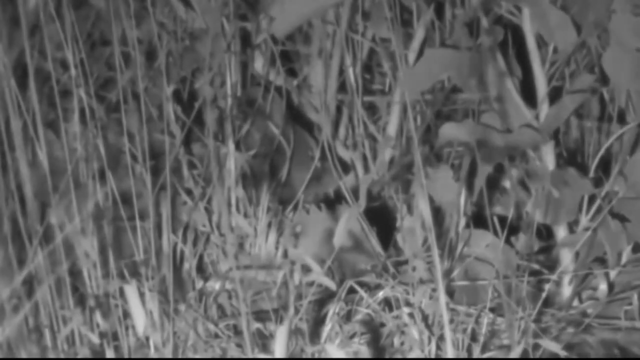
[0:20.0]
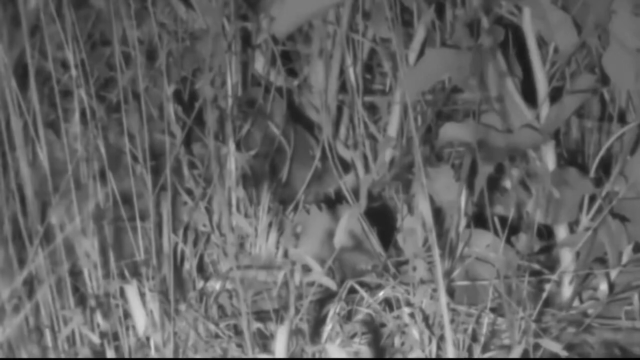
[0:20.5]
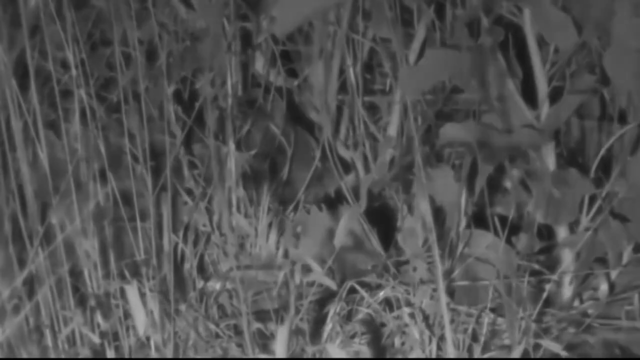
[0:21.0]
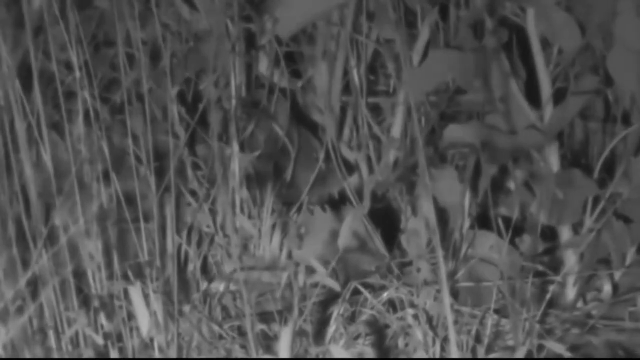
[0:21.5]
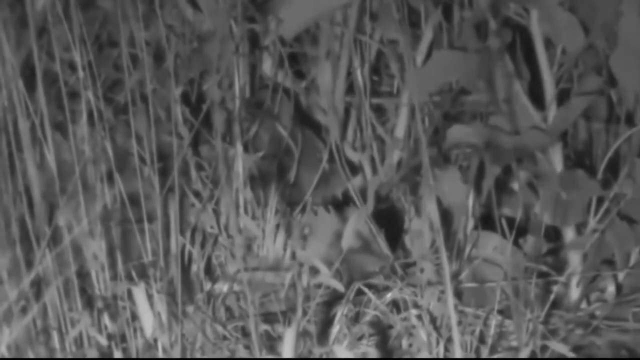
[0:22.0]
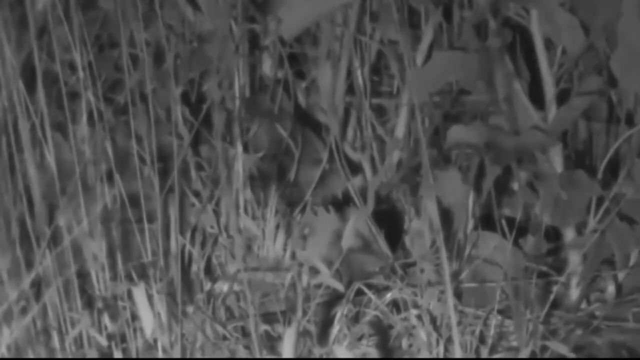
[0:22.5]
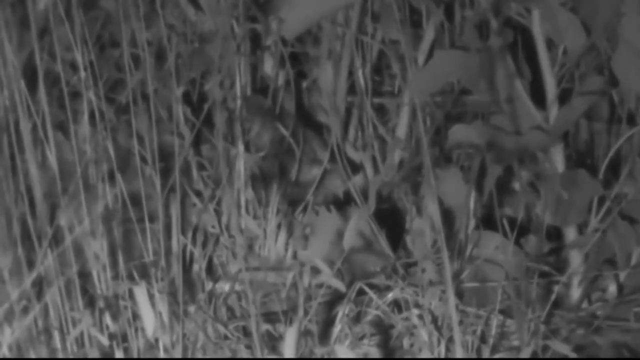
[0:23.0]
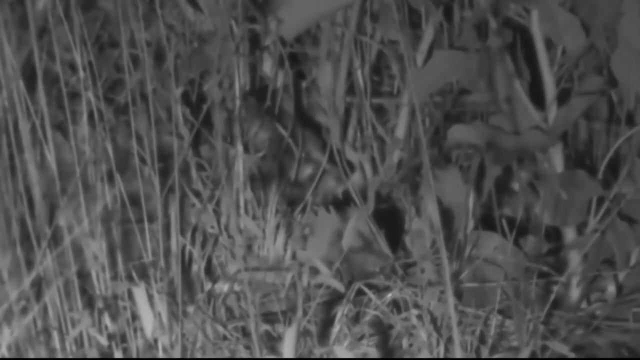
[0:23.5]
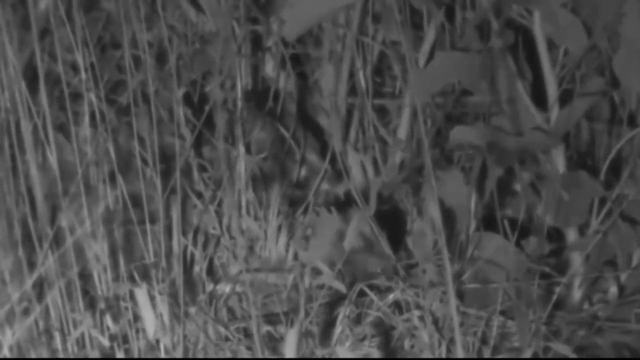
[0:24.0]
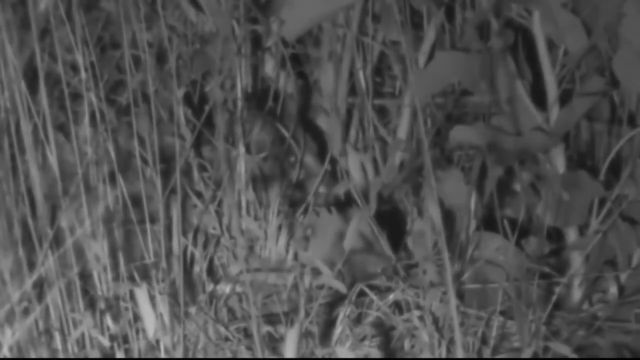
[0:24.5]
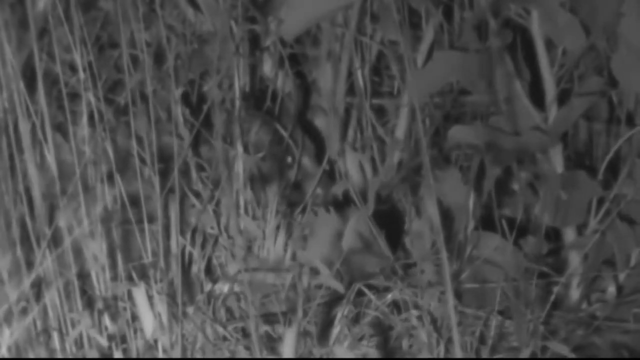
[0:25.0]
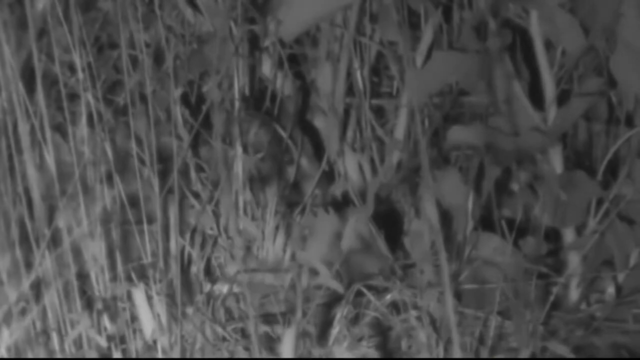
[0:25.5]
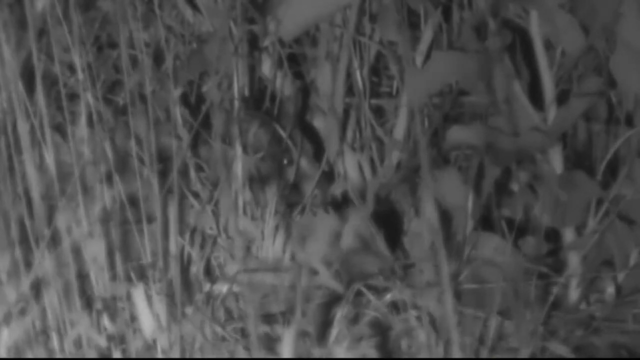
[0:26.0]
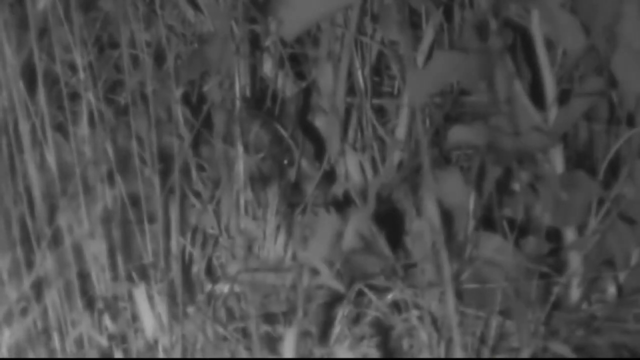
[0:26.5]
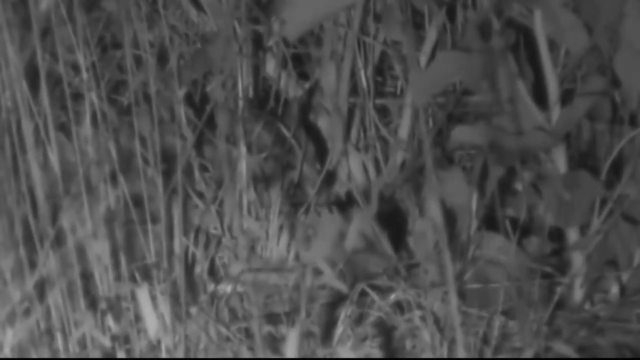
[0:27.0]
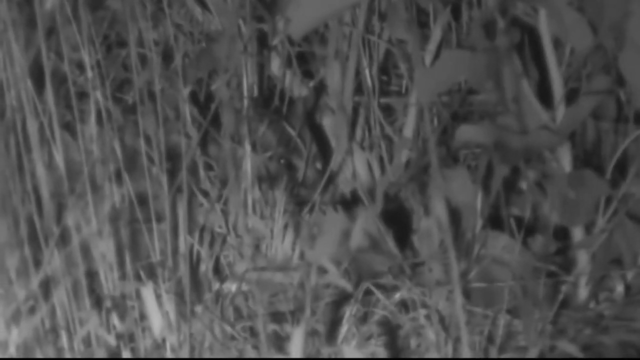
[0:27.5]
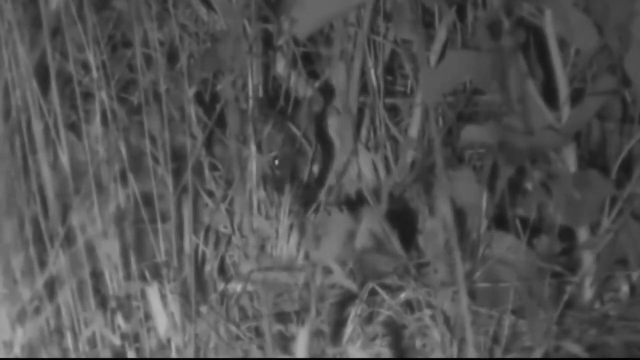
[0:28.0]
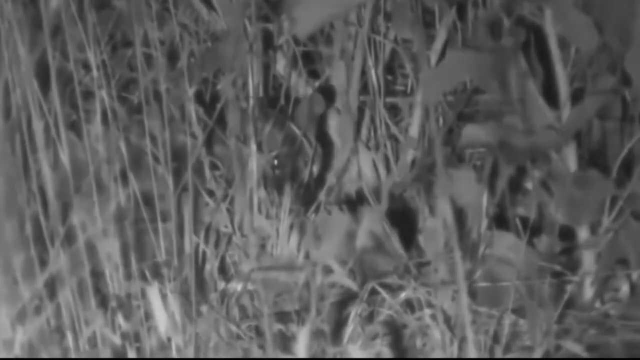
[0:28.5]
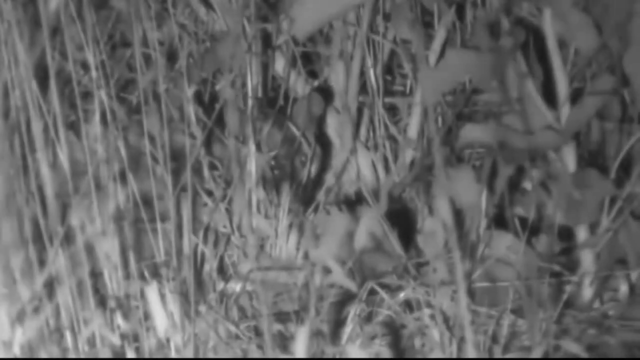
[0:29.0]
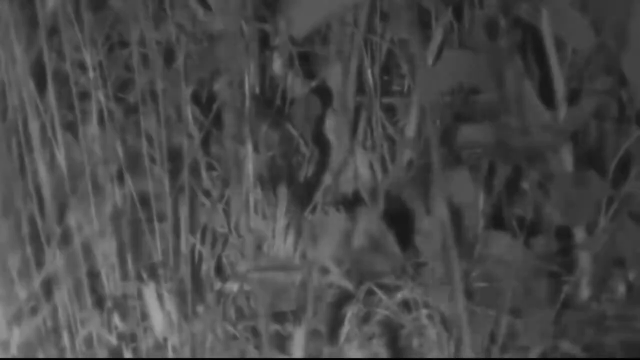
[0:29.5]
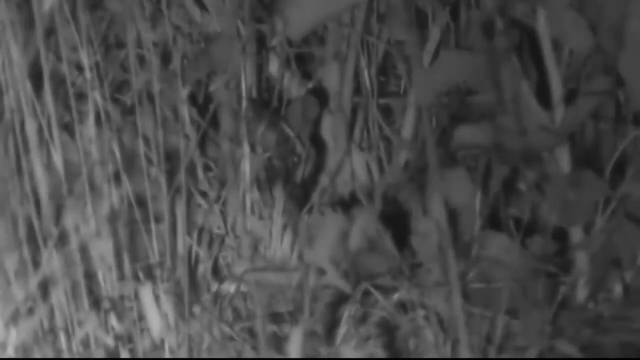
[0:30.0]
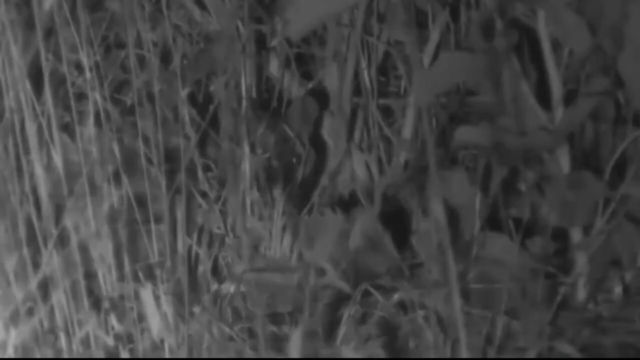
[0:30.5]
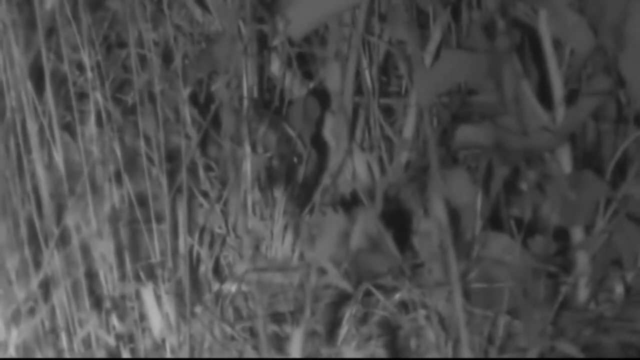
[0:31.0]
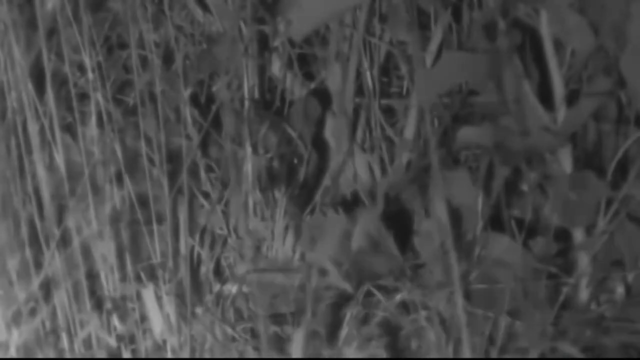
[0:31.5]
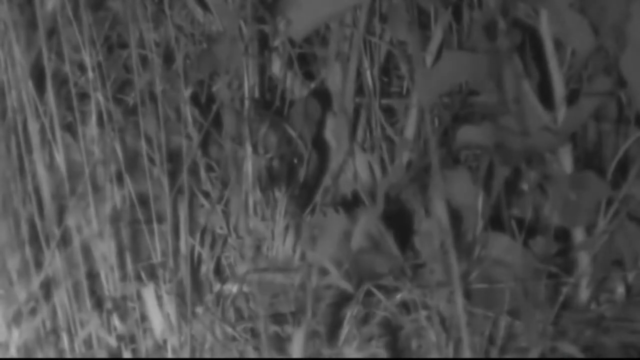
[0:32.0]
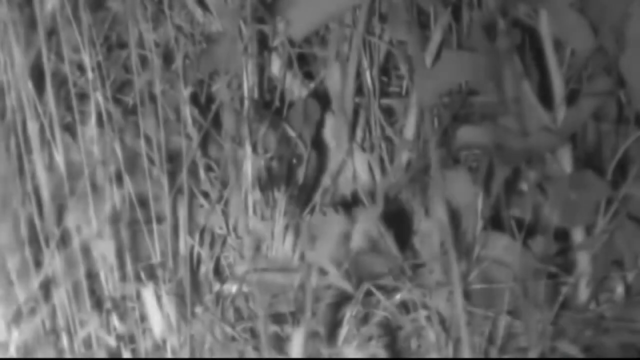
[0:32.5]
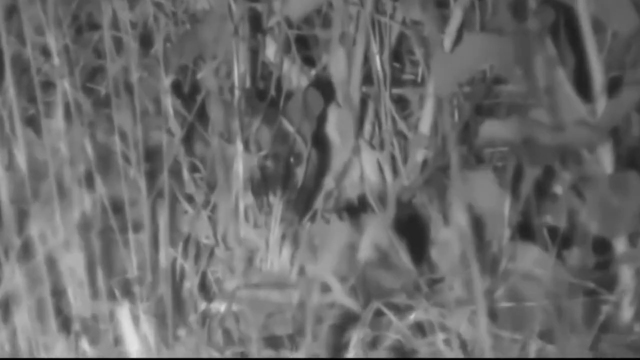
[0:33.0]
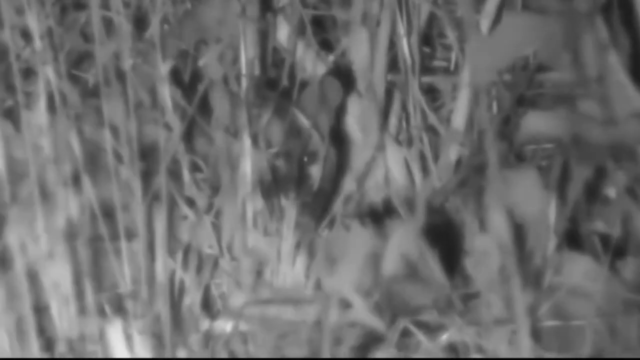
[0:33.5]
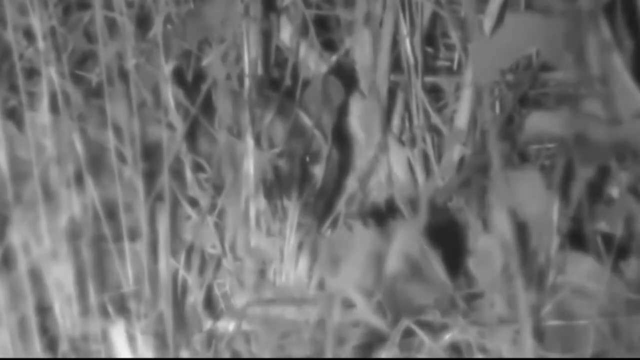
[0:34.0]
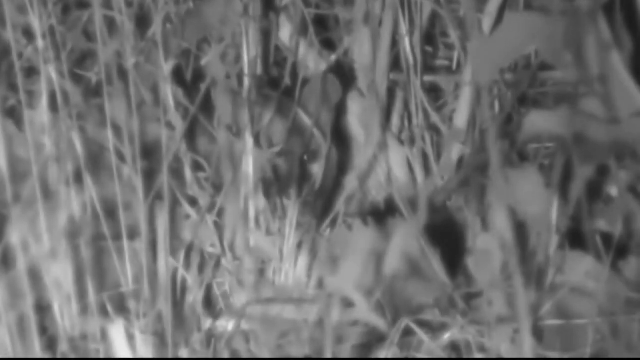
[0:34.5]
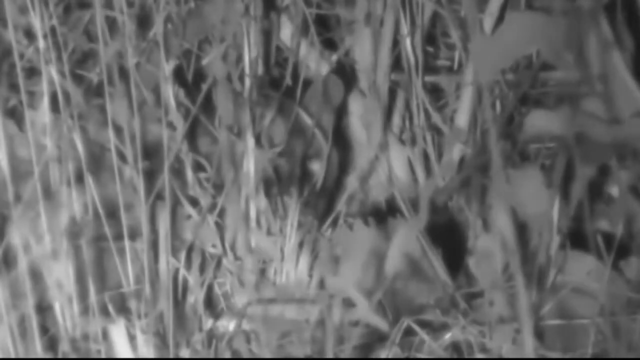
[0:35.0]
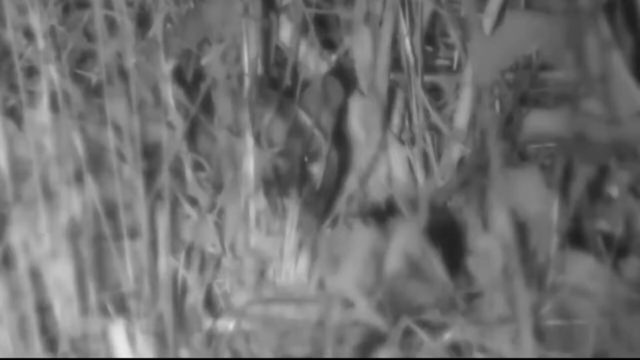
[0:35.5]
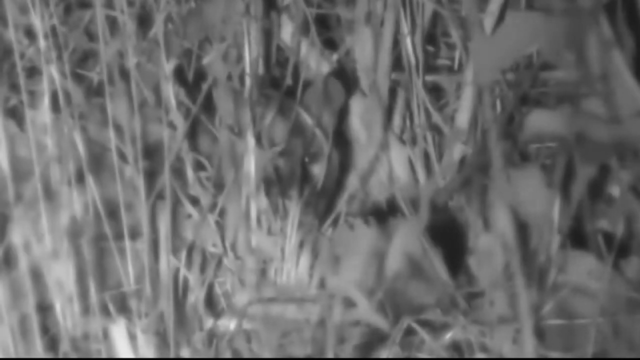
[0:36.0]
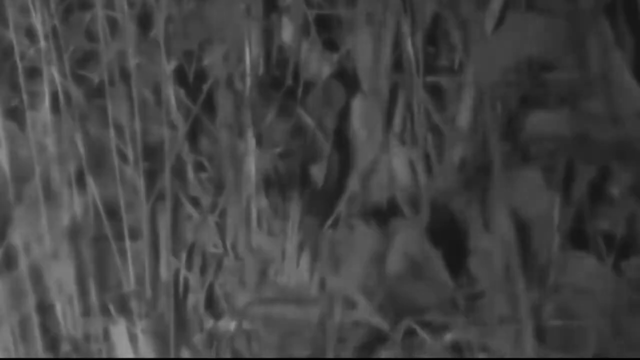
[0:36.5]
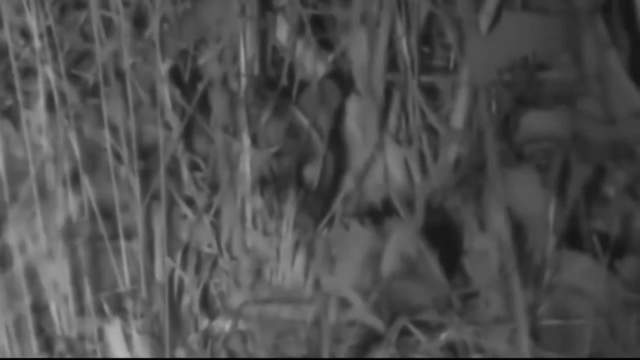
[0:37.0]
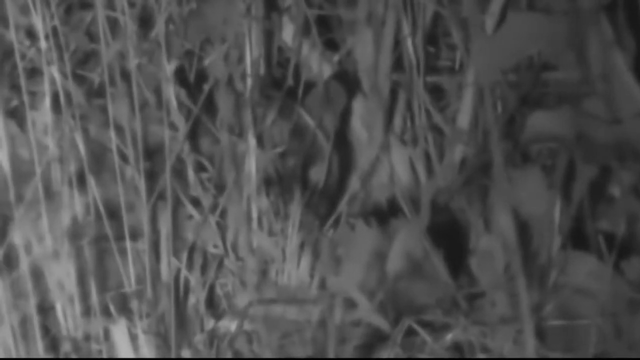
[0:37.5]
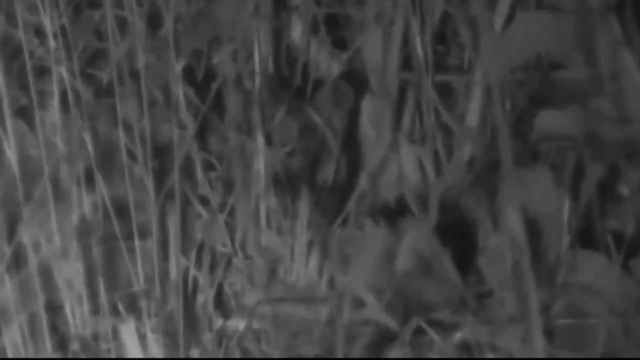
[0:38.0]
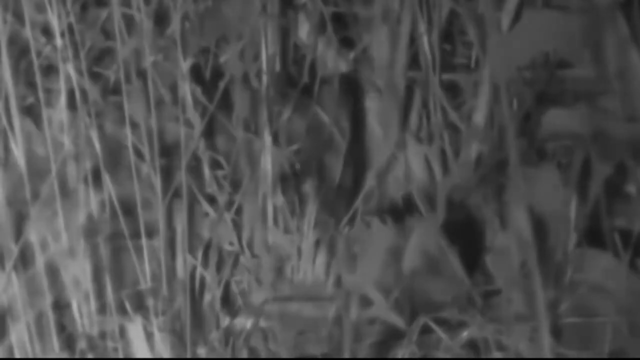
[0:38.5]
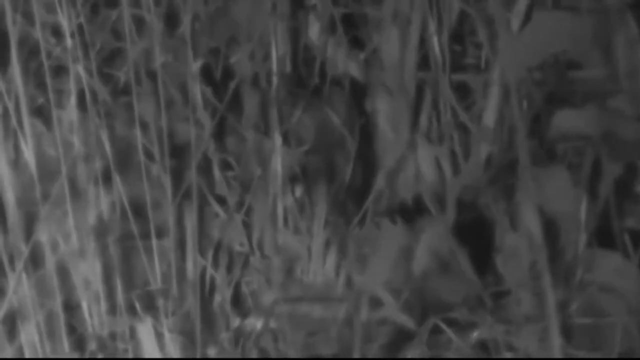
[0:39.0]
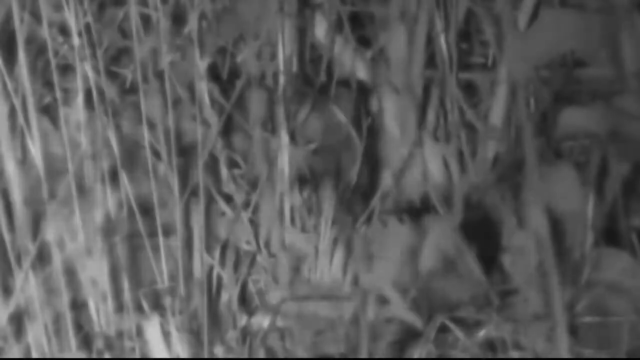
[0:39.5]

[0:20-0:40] Something in the center of the picture moves around behind the grass. It is not a bulldog; it could be one of those monkeys with a long nose, and it looks like there is more than one. It appears to open its mouth, though there seem to be eyes lower down, and it may be some kind of wild cat. It blinks its eyes, and something seems to be sneaking up behind it. The little face on the right side is still visible; it is possibly a wildcat but looks more like a dog.